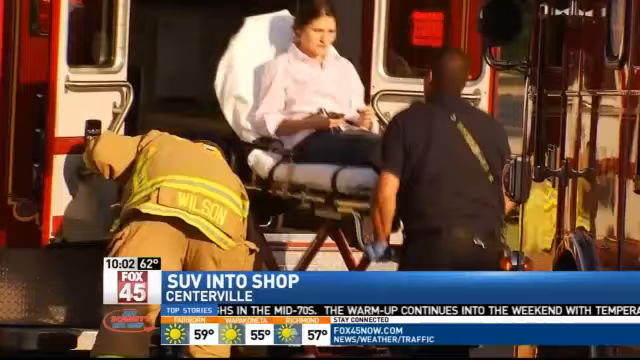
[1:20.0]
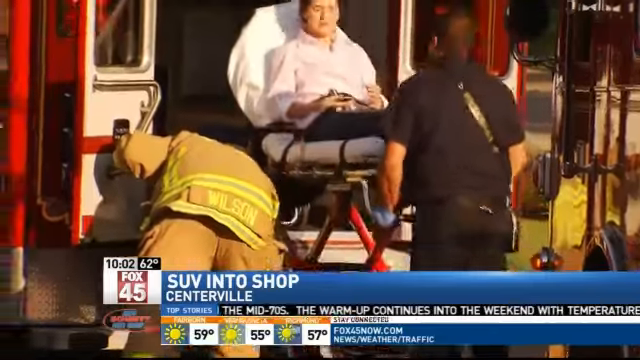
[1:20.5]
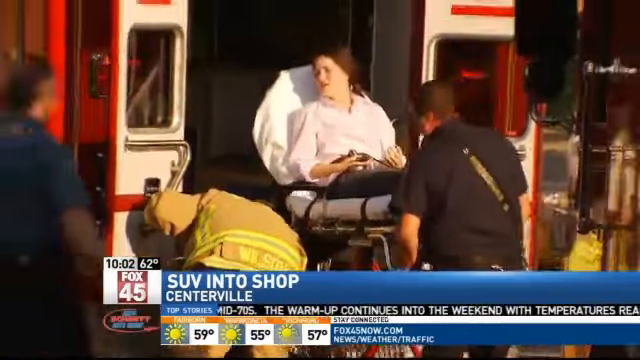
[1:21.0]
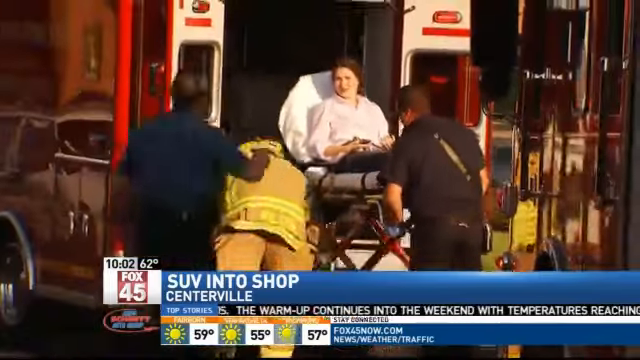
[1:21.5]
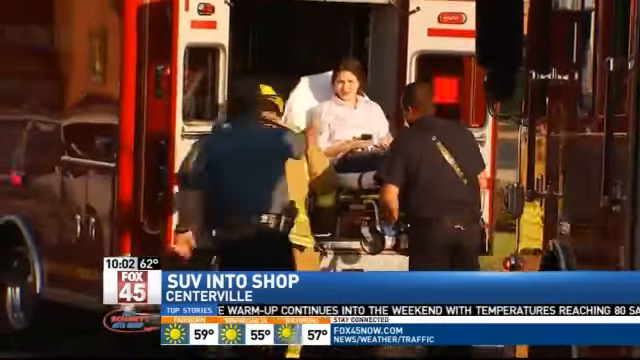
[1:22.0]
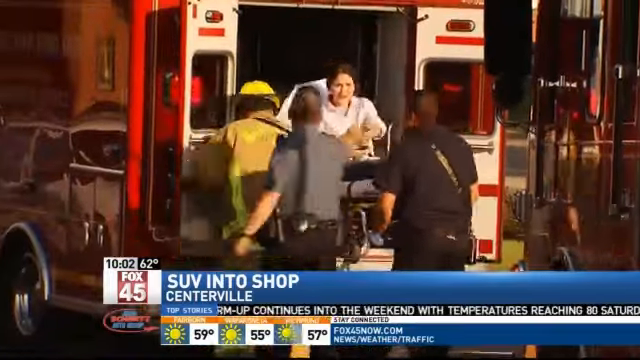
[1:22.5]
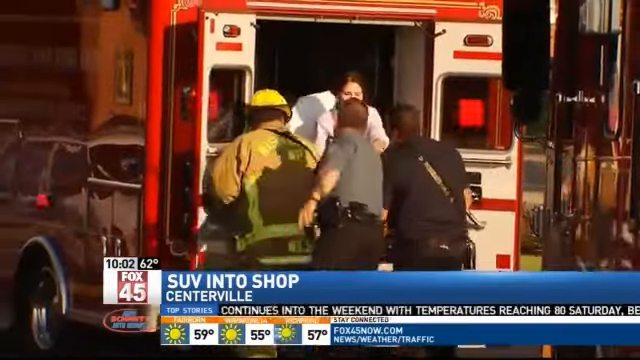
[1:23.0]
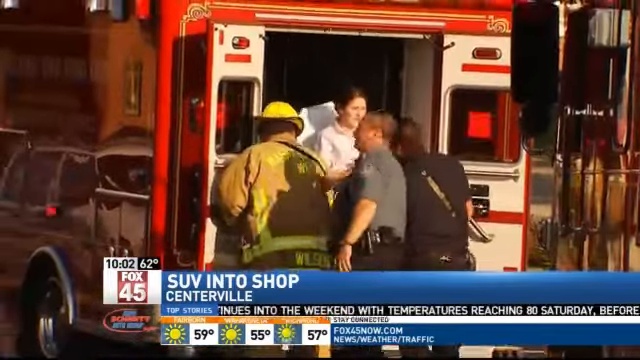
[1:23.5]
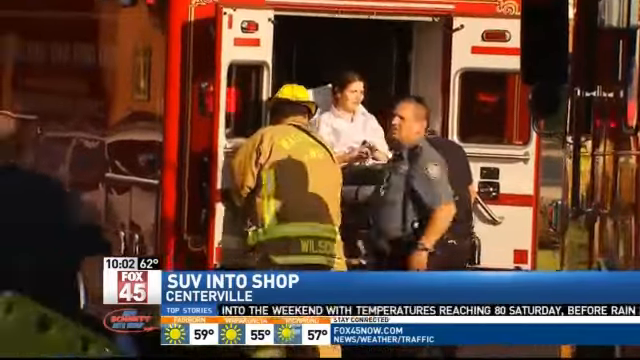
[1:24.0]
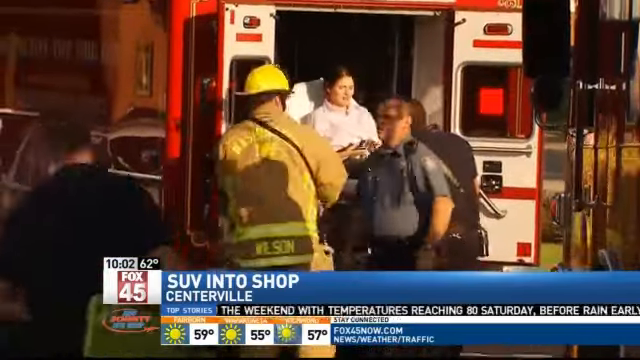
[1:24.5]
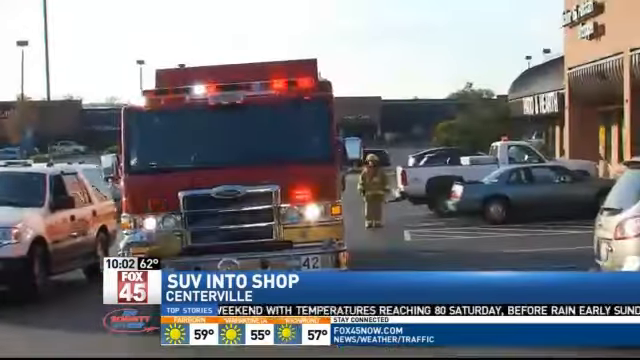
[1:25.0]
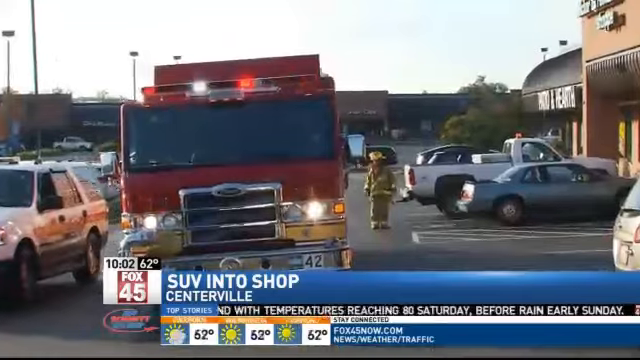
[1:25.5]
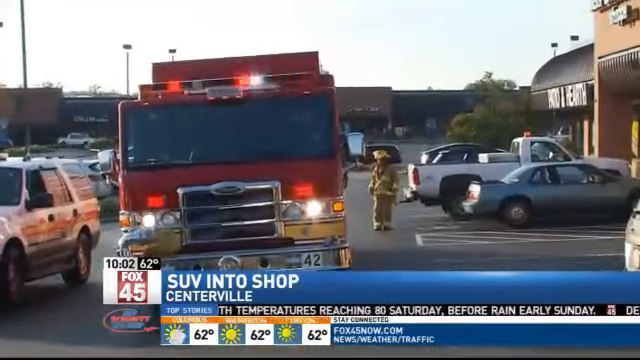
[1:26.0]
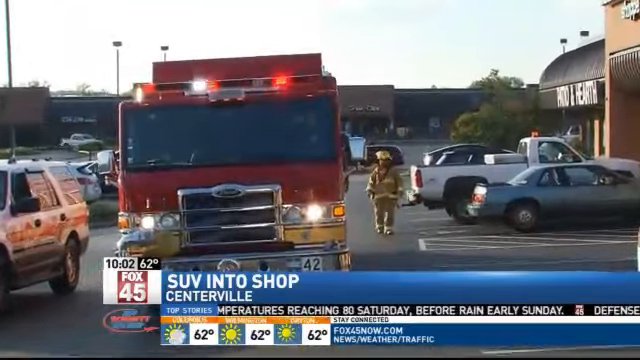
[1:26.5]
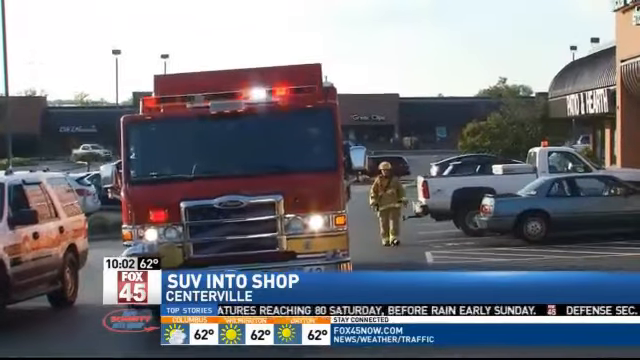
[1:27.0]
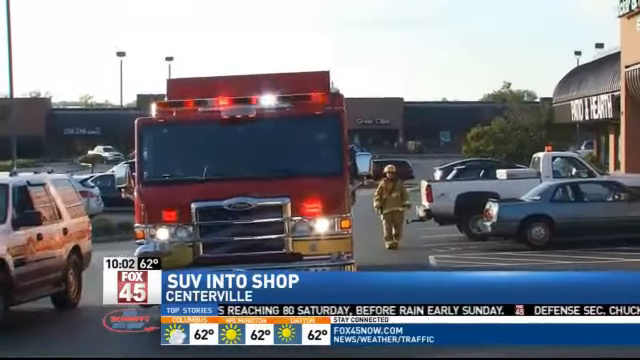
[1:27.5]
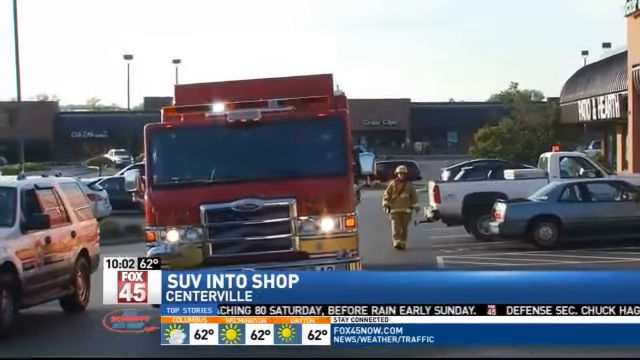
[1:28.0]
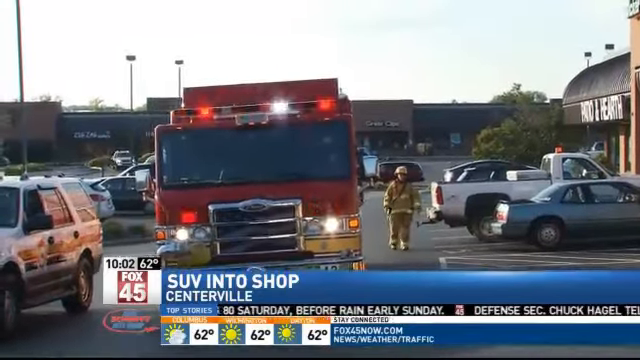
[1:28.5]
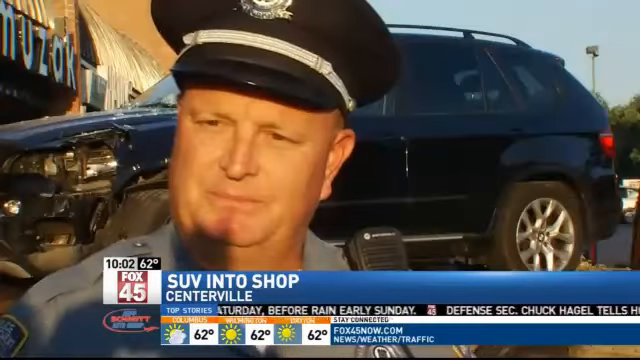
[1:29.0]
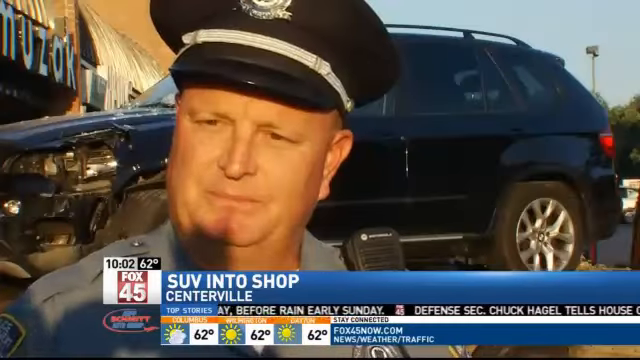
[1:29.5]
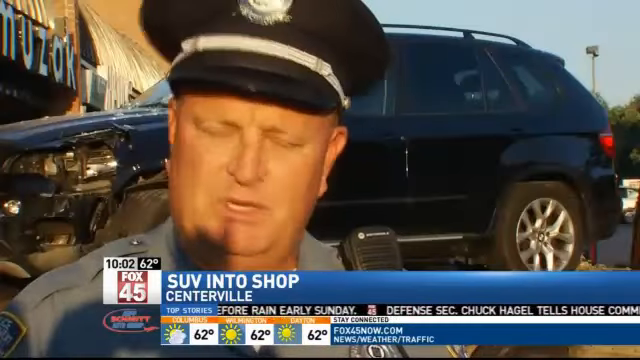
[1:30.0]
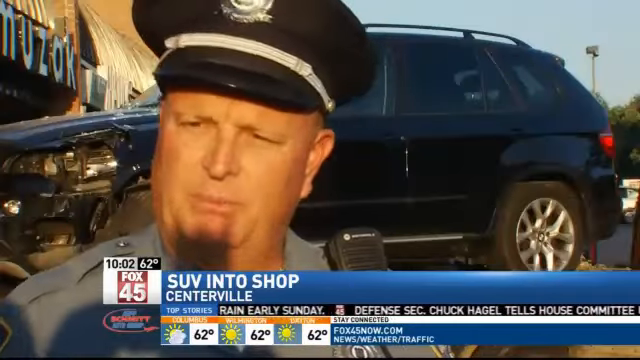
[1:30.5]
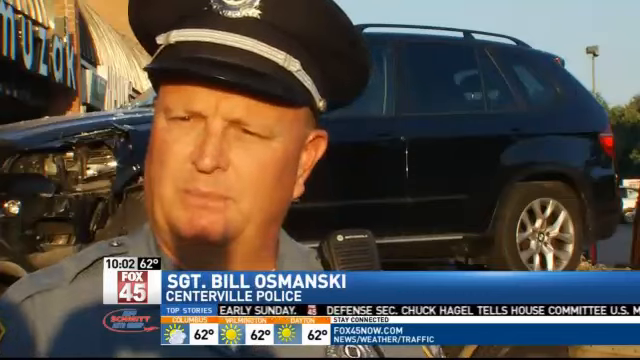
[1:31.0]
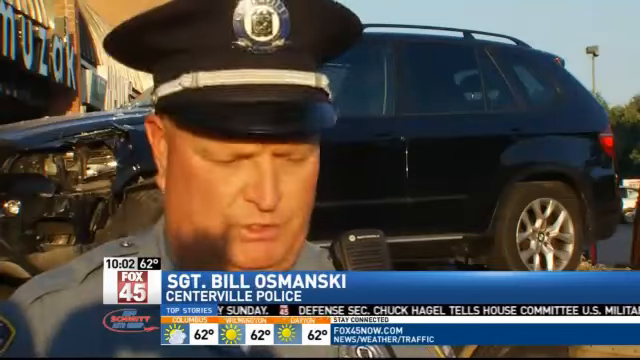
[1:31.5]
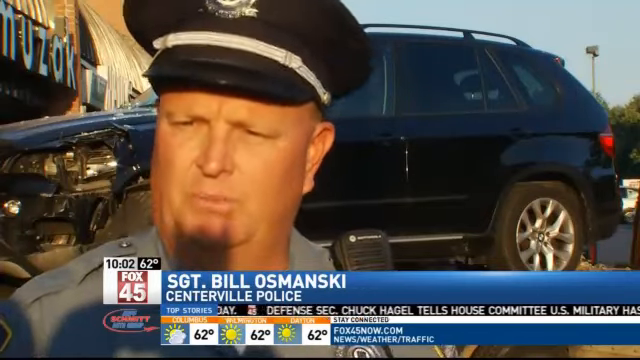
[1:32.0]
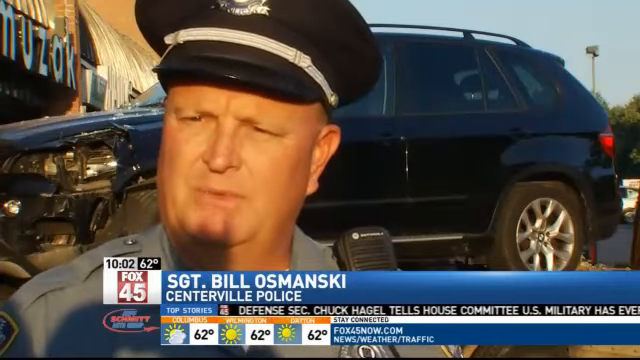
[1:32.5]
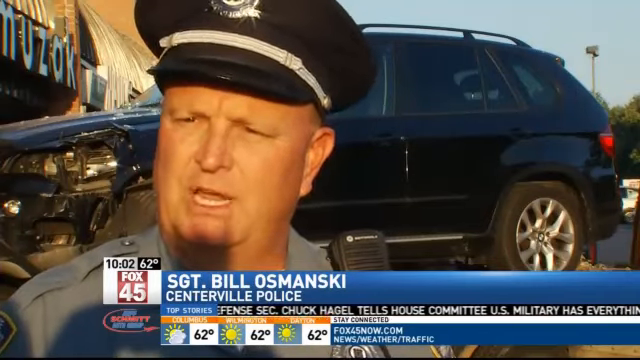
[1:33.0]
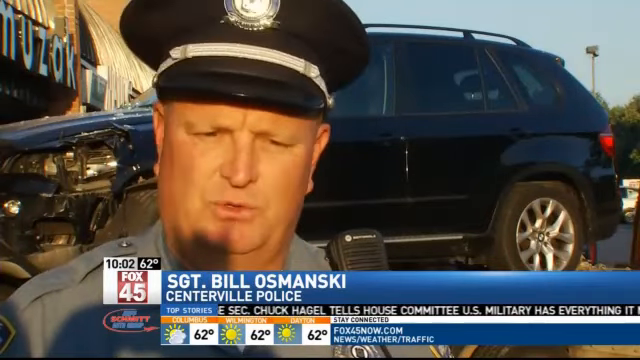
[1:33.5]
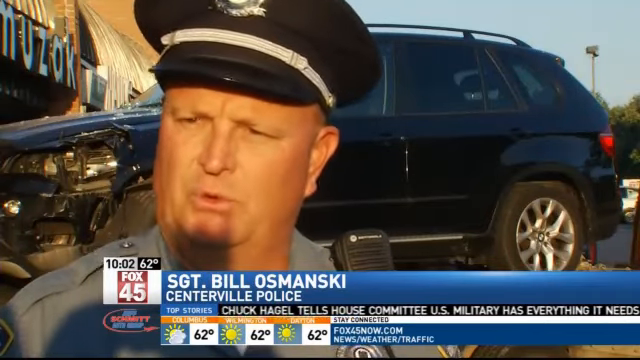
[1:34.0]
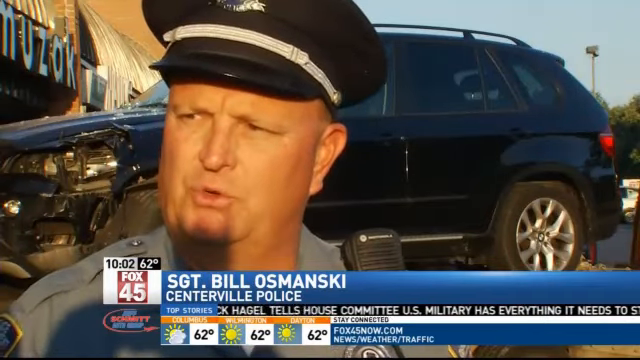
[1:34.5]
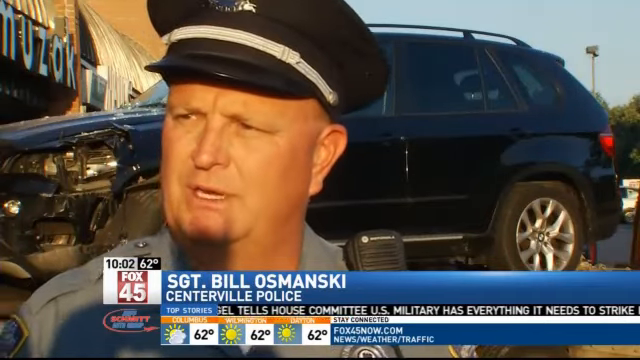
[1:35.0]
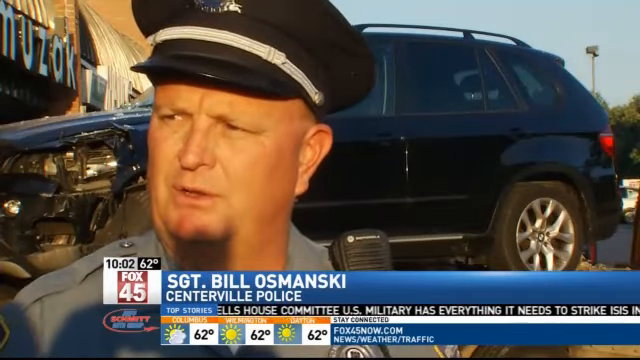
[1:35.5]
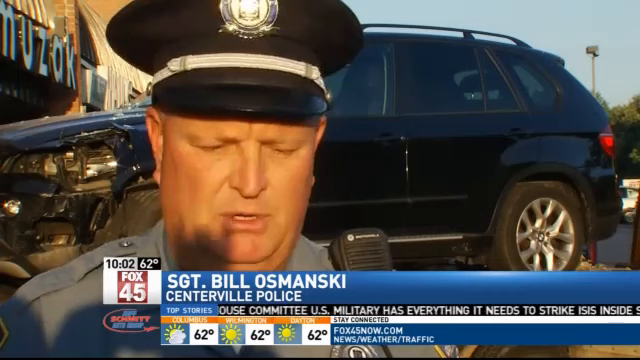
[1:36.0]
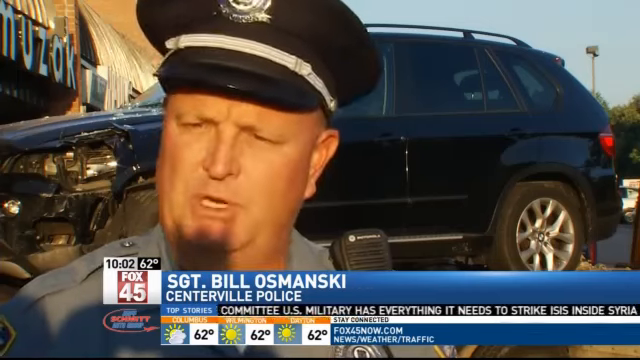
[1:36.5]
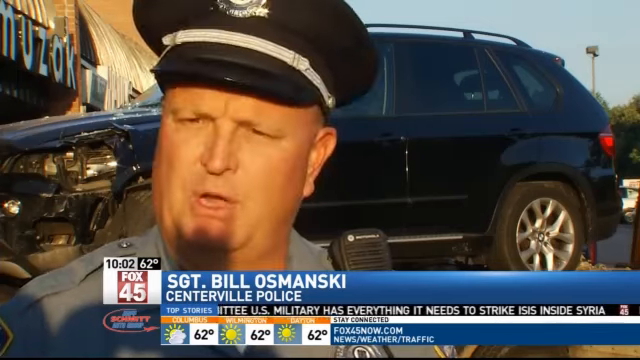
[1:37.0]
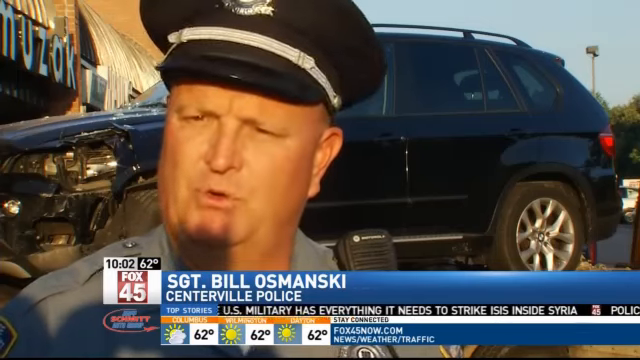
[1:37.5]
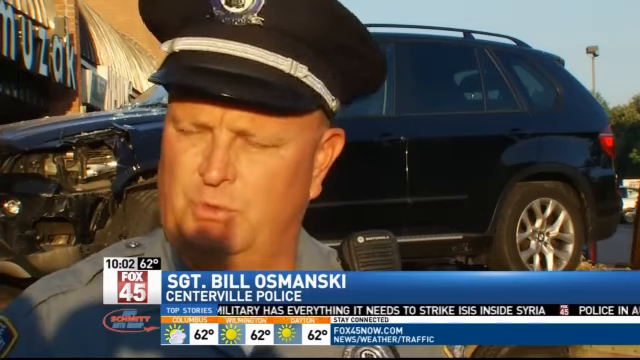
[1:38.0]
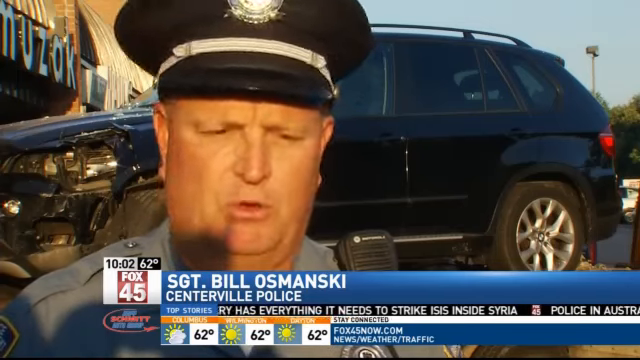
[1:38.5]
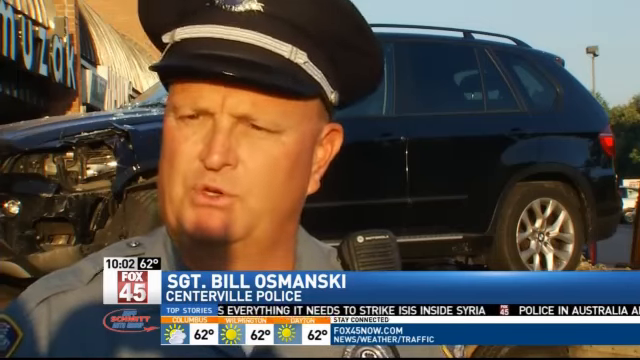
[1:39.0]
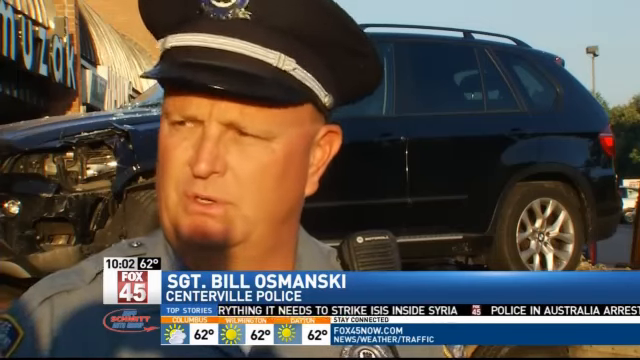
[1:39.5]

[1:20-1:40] In this Fox 45 News footage, a person is being loaded into the back of an ambulance while a fireman directs the ambulance on how to back up. A police sergeant, Bill Omansky of the Centerville Police, is shown speaking. Behind him is the wrecked car, which looks like it is sitting on a platform on the back of a tow truck, since it is elevated. He wears a hat that is part of a cop uniform and looks at a reporter. He shakes his head and puts his head down. An odd-looking shadow on his face almost looks like a beard; it is black and jagged at the top. Two people, an EMT worker and a fireman, load the lady into the back of the ambulance, and a policeman is there as well.